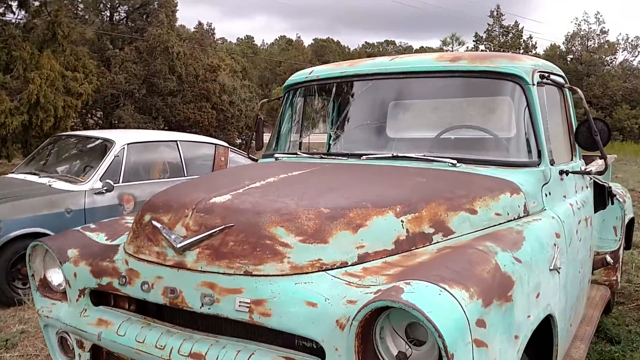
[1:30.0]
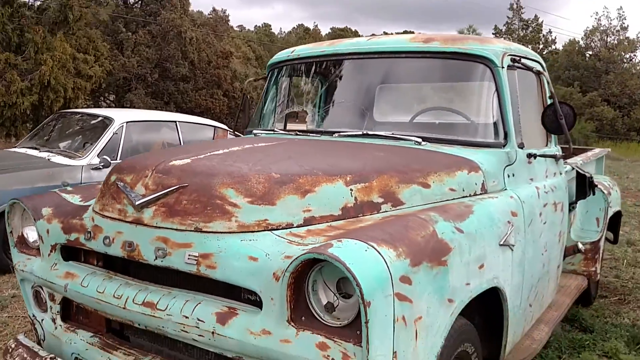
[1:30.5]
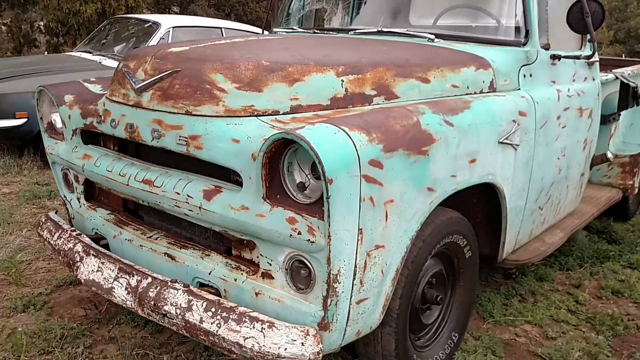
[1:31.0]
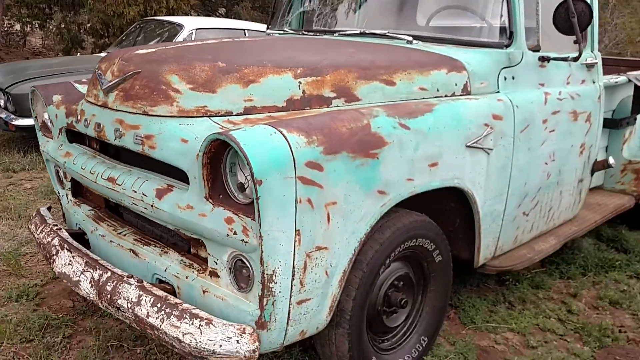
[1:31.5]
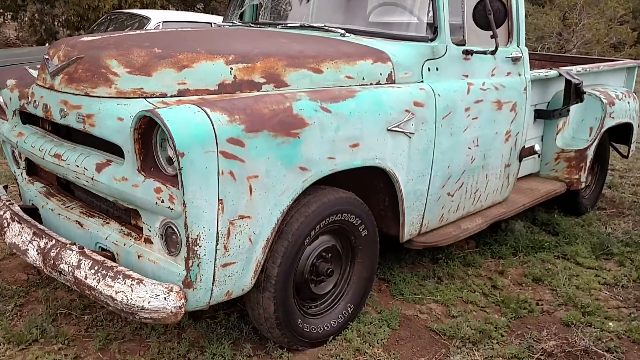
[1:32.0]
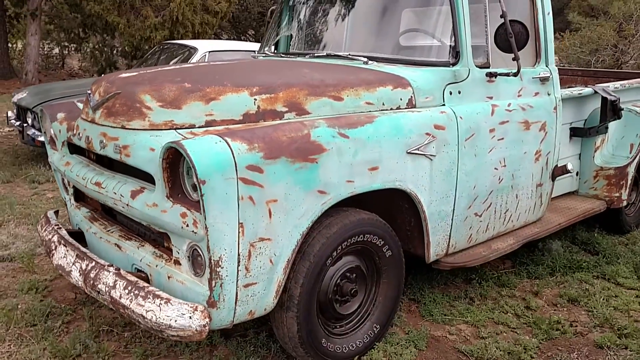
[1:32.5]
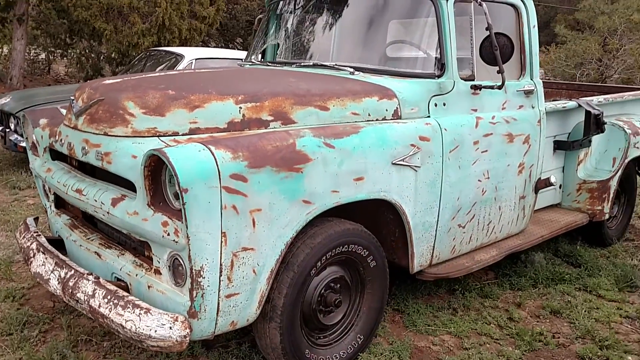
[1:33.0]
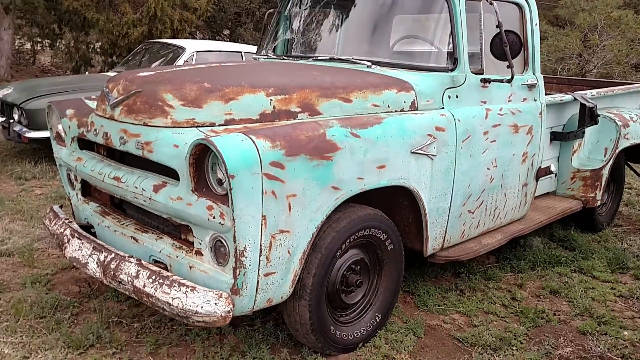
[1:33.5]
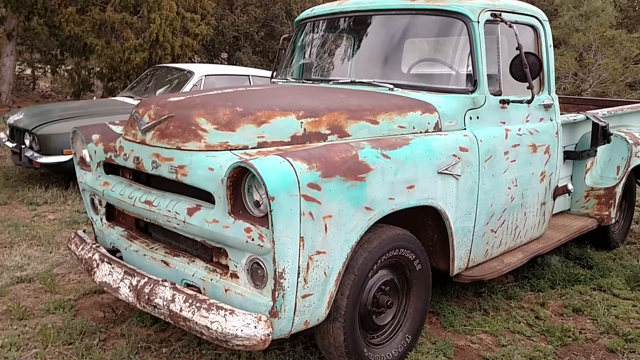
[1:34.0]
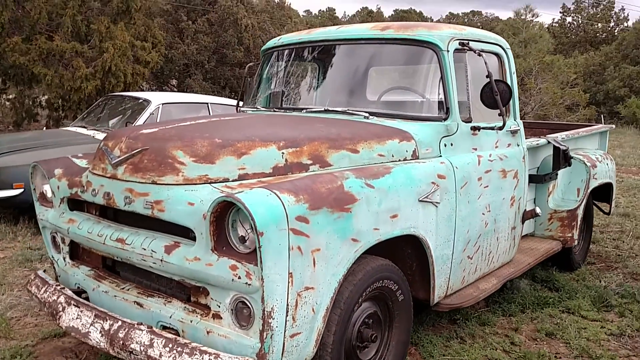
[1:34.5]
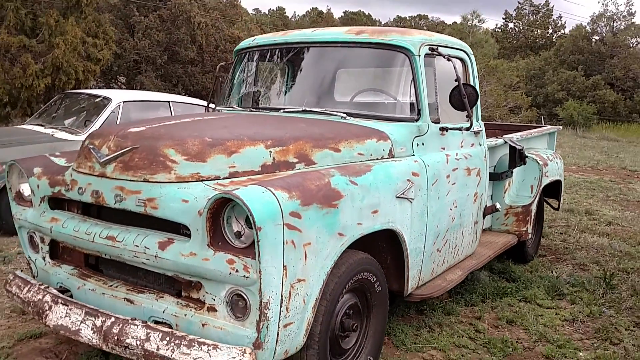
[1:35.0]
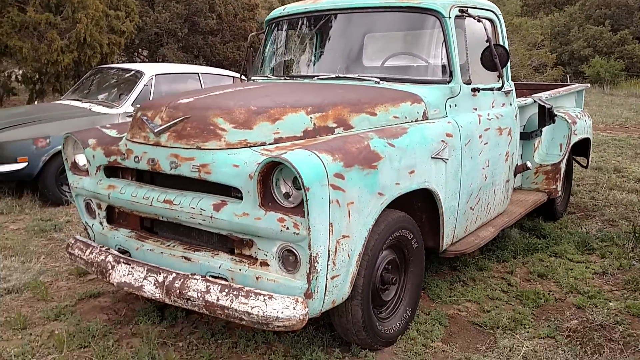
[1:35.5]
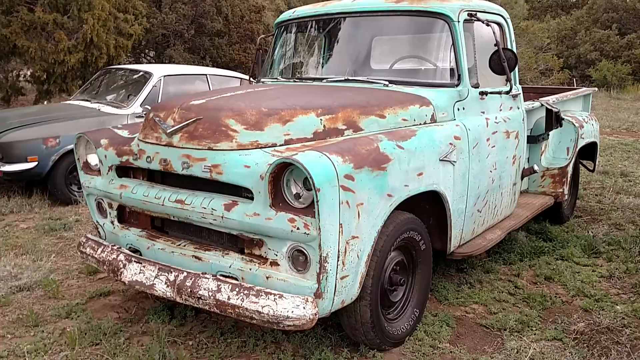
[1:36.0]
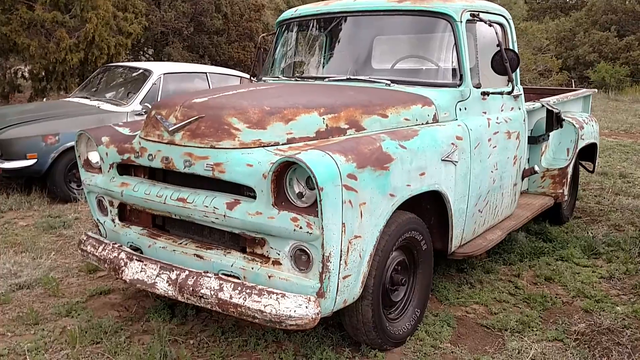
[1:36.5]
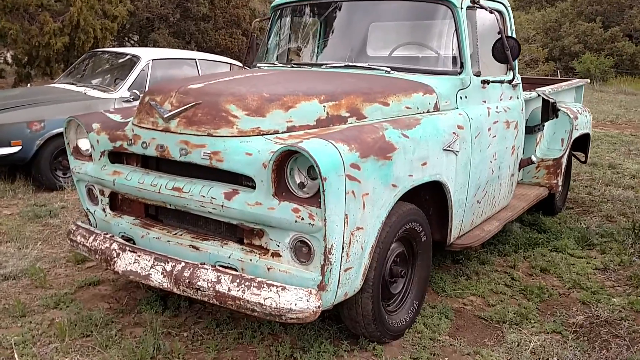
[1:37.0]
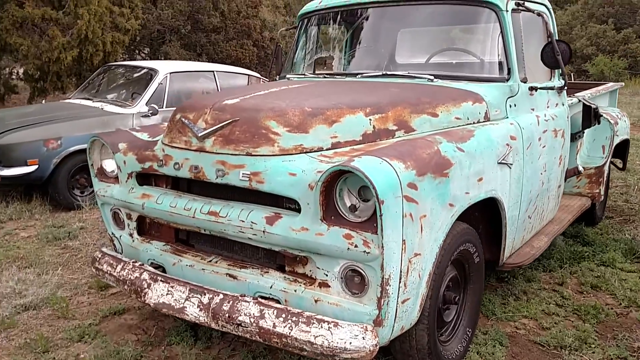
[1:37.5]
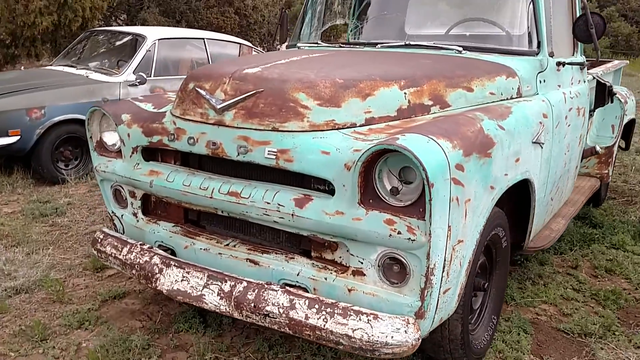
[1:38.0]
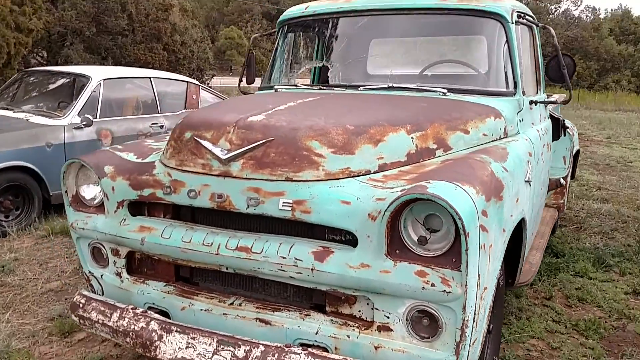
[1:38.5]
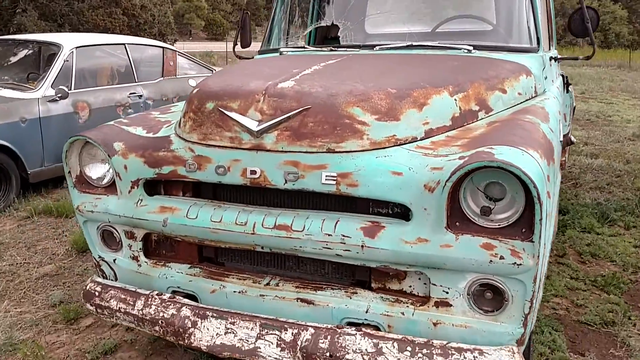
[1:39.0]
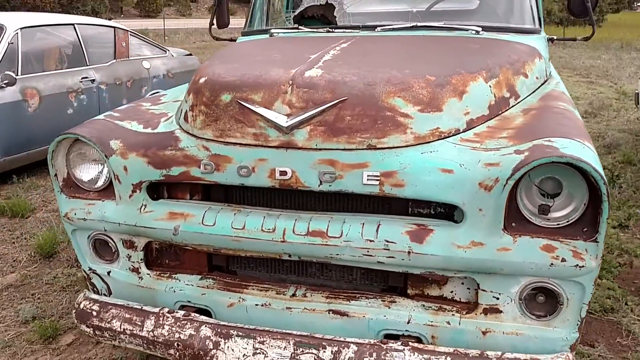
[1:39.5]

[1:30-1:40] The camera pans around an old, decrepit Dodge pickup truck. It is white with lots of brown marks and rust marks all over it, or it possibly used to be red and all the paint is gone, leaving only some white framing. The truck is in some sort of forest or yard, a grassy plain with some other cars around it that looks like a place where old cars go to die. The pickup sits in one spot while the camera zooms around its front, showing the silver triangular-shaped logo on the hood and "Dodge" in silver letters on the front. The camera moves back and forth a little and is a bit shaky. In the background the sky looks overcast, and there are a whole bunch of trees and a forest in the backdrop.